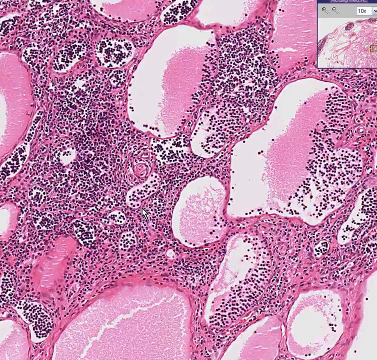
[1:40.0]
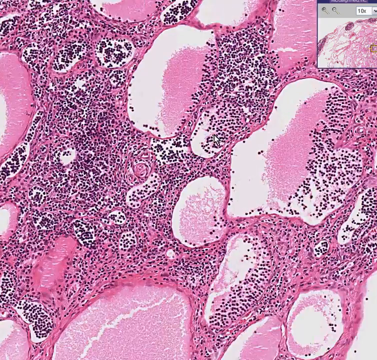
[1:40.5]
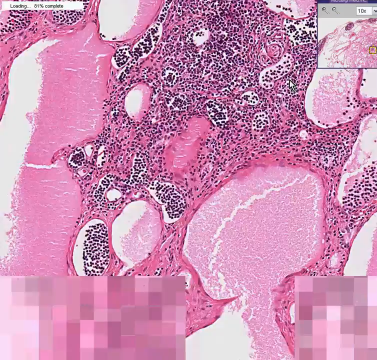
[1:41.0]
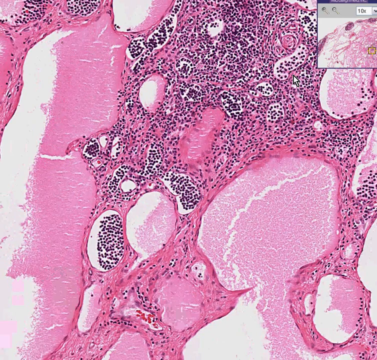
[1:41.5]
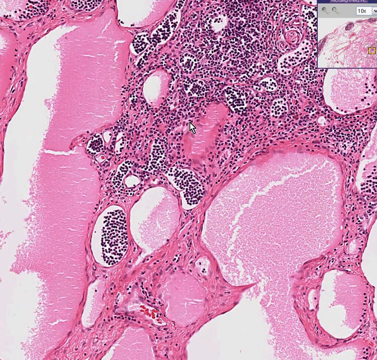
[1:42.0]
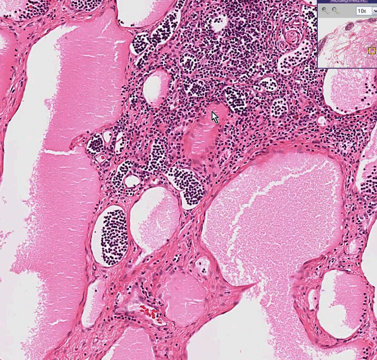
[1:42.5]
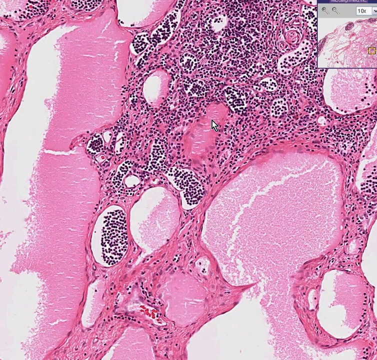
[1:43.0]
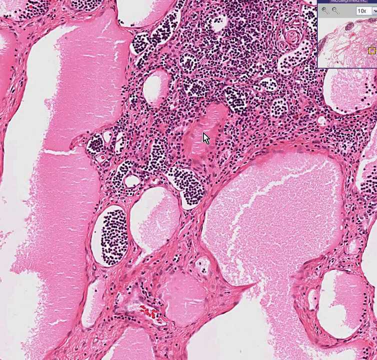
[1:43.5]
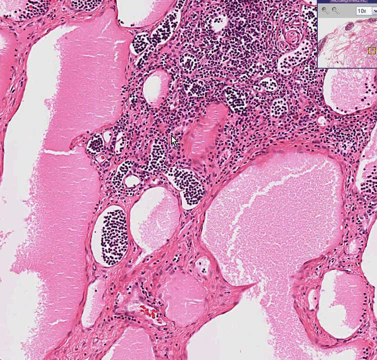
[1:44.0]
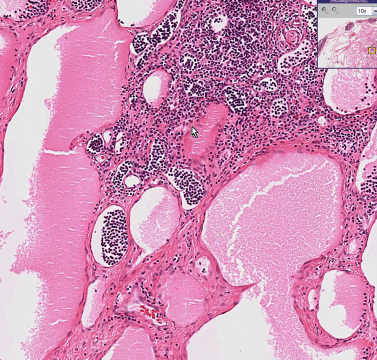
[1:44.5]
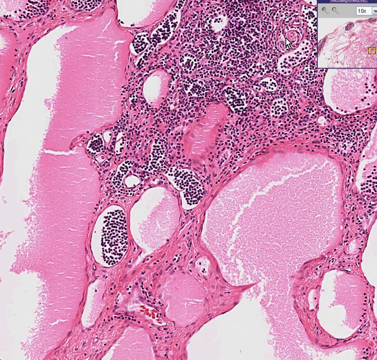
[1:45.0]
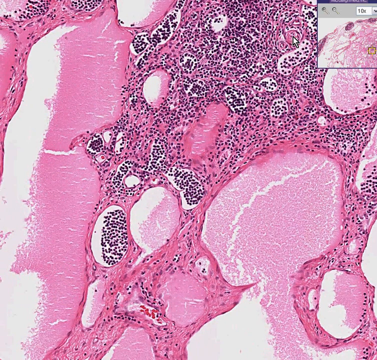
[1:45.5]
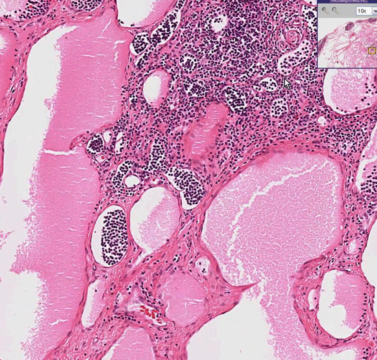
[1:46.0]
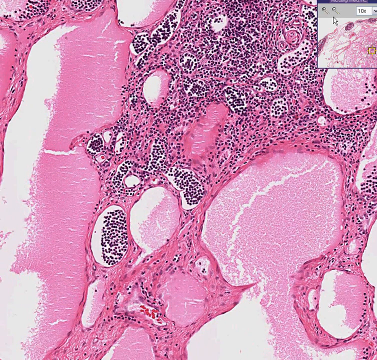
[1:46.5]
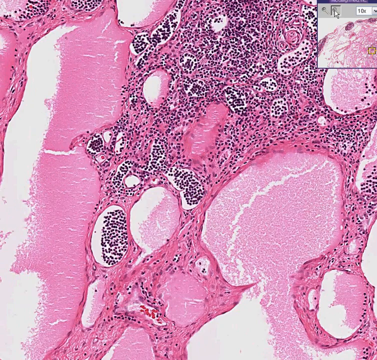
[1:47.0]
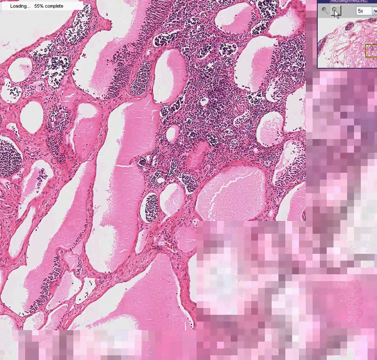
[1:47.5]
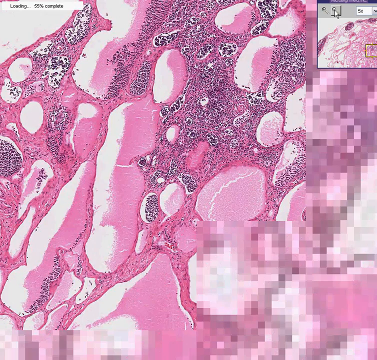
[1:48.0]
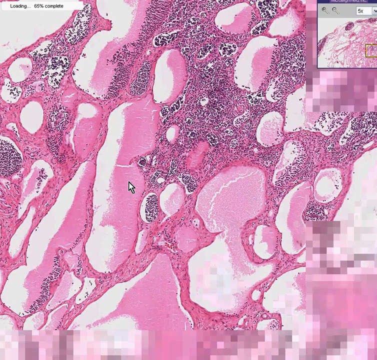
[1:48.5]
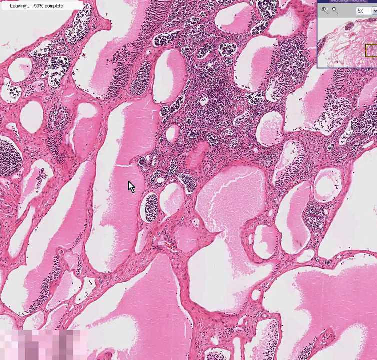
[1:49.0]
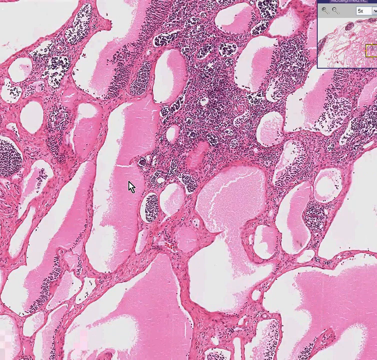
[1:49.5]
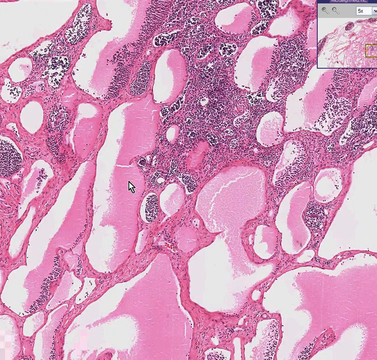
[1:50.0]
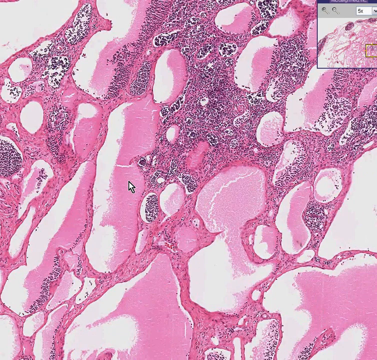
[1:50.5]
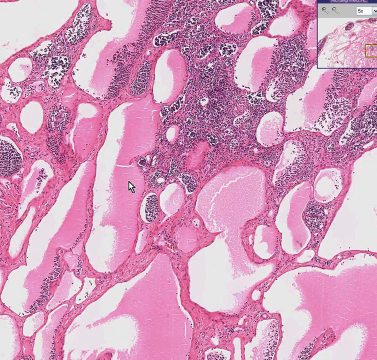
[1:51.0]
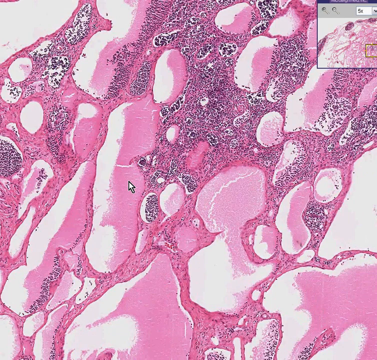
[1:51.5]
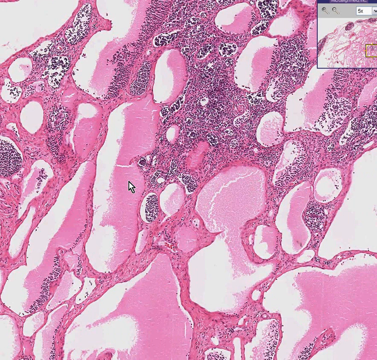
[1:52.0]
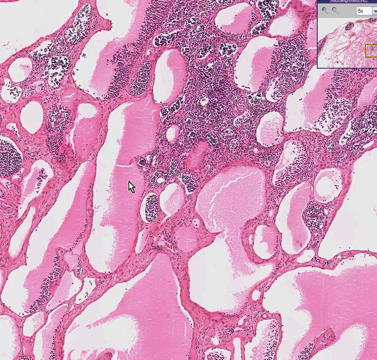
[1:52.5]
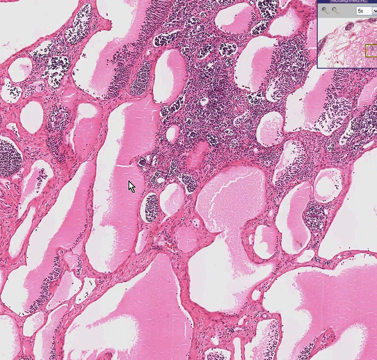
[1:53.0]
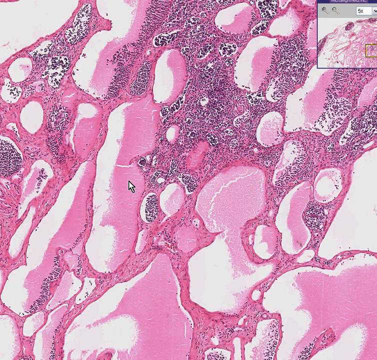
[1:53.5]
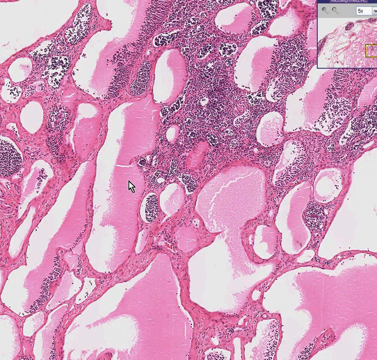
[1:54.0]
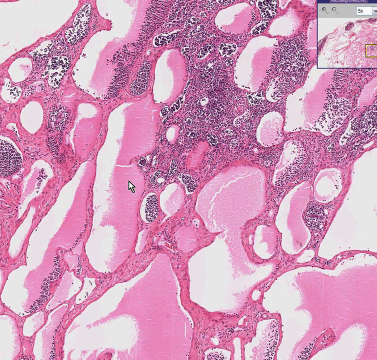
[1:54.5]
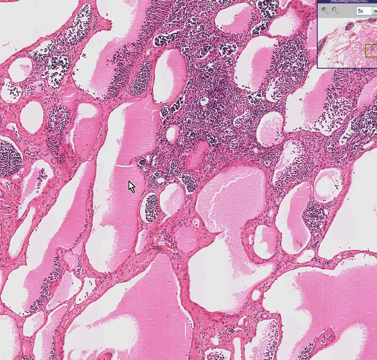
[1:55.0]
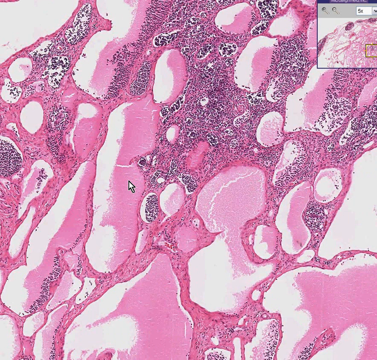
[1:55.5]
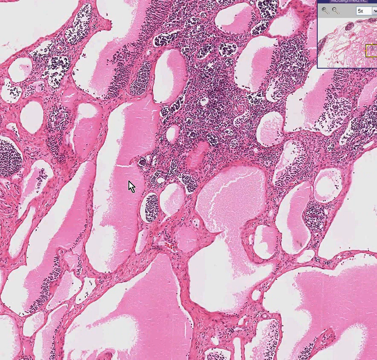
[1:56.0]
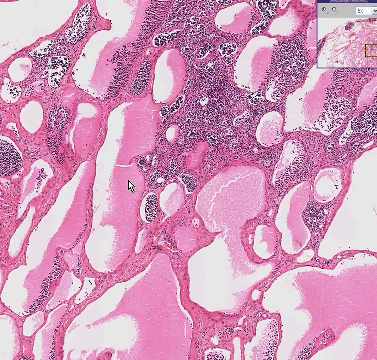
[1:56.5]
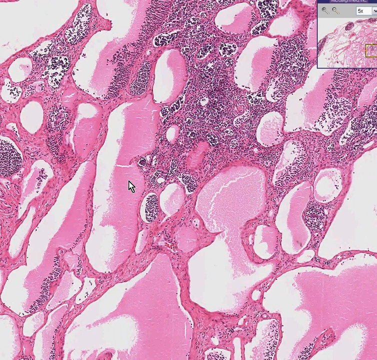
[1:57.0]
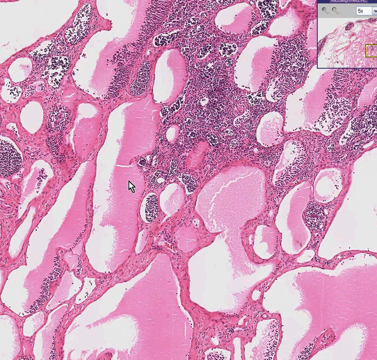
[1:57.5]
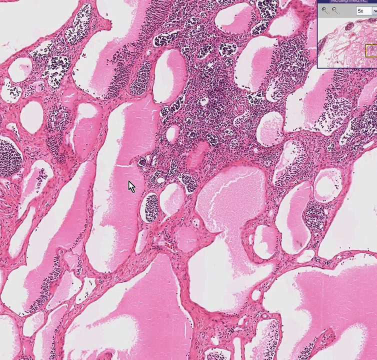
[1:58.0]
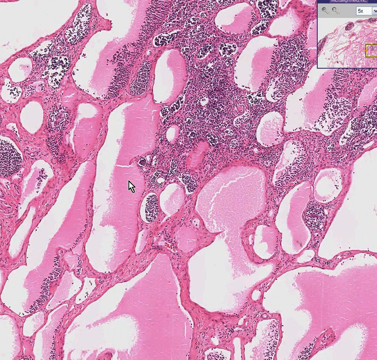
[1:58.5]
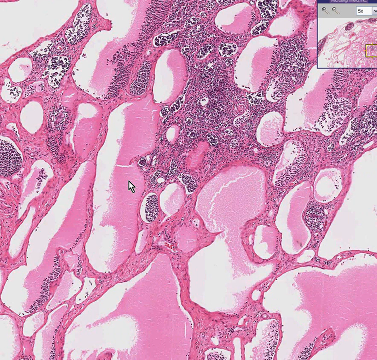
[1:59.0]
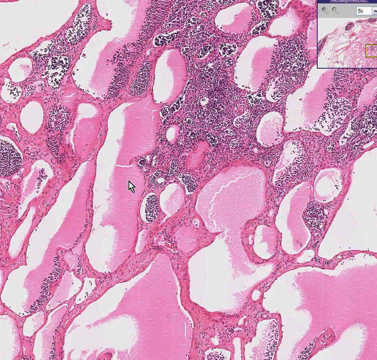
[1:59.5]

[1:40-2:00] The image is now mostly red and pink with very little white in the background, and there are more black dots than before. The user moves the mouse, shifts the image down and to the left, and points at a little clump of red, or dark pink, in the middle. He zooms in, the image renders from pixelated to clear, and the mouse stays stationary for a while. Black dots cover almost every area, especially the red and pink areas; some of the white areas have significantly fewer black dots but still have some. There is less movement around the image than before.